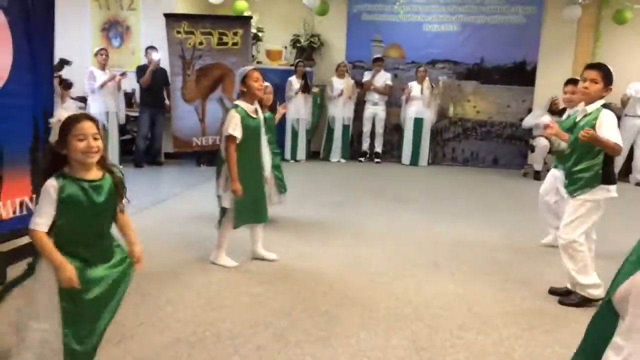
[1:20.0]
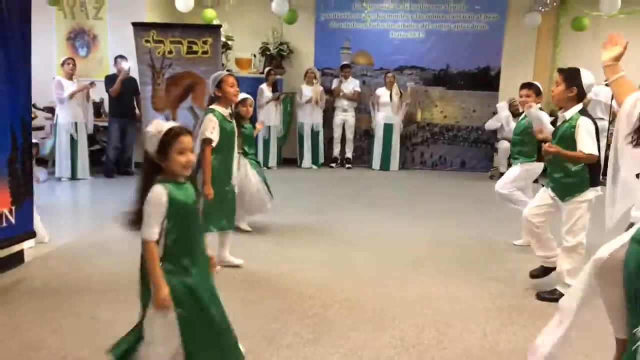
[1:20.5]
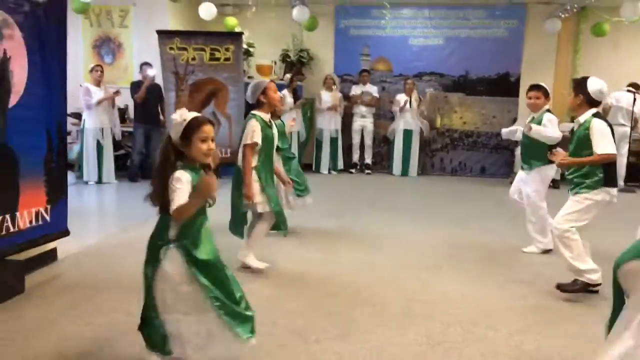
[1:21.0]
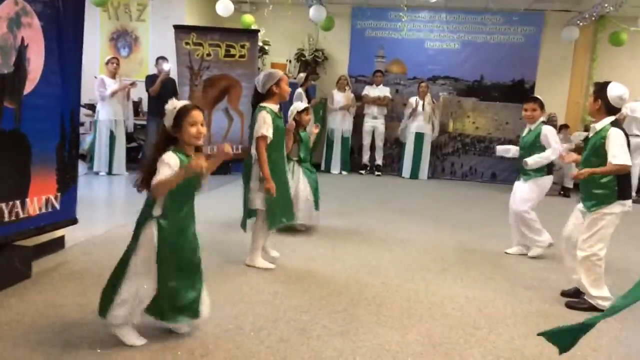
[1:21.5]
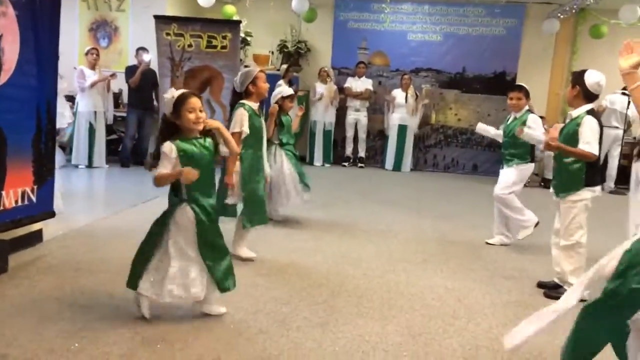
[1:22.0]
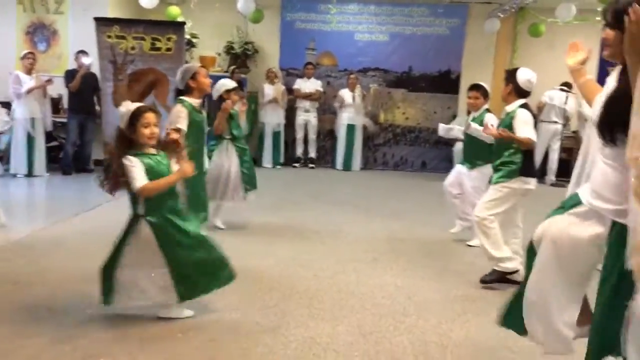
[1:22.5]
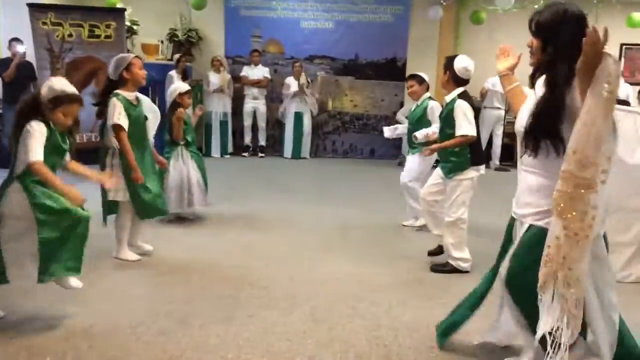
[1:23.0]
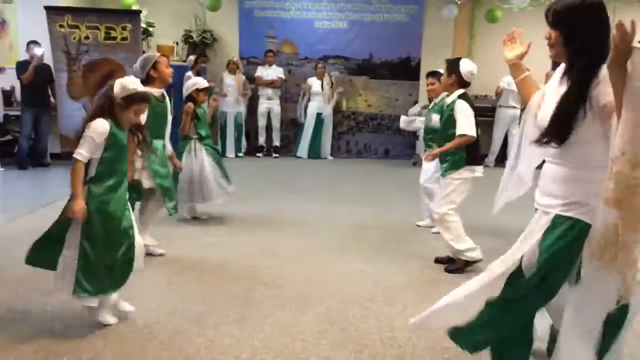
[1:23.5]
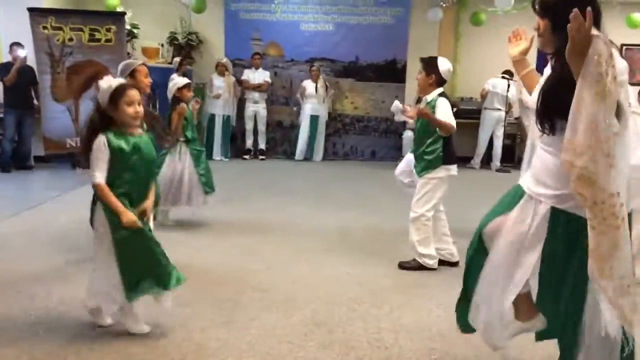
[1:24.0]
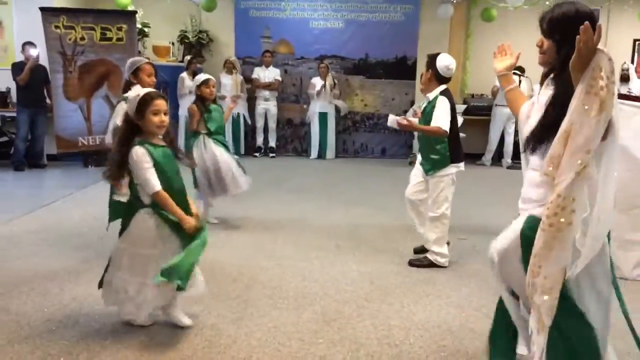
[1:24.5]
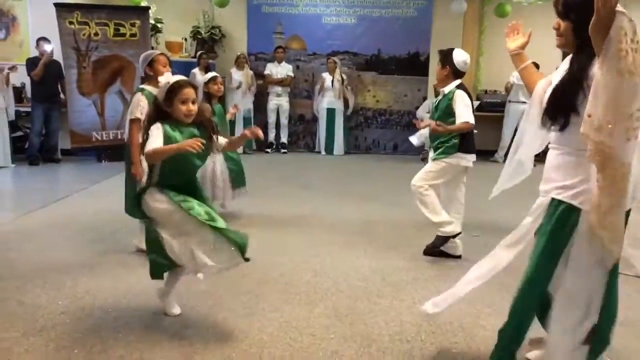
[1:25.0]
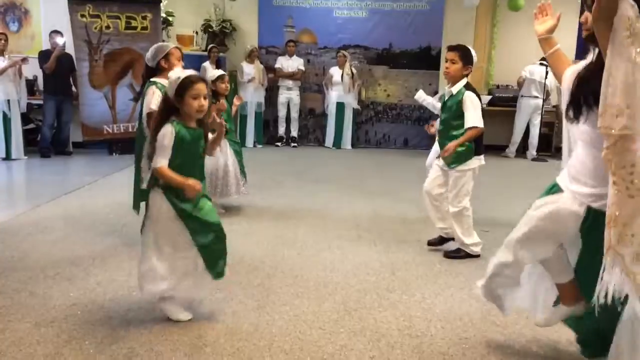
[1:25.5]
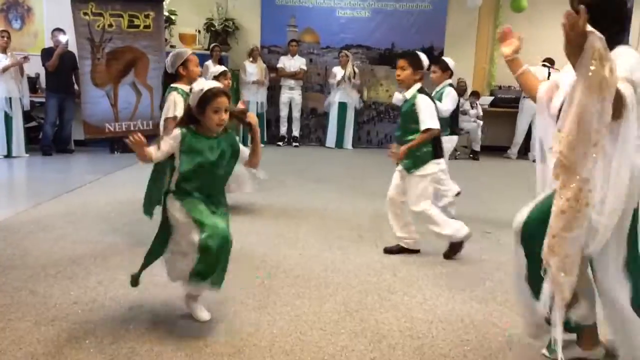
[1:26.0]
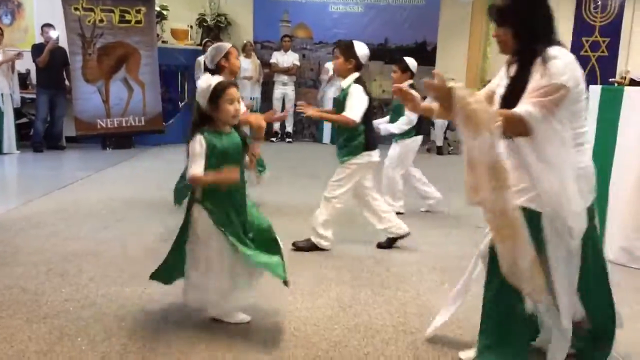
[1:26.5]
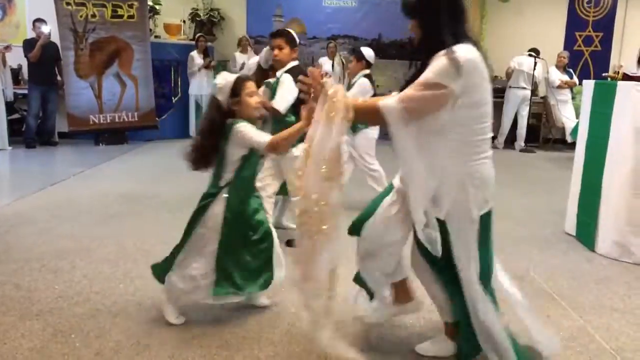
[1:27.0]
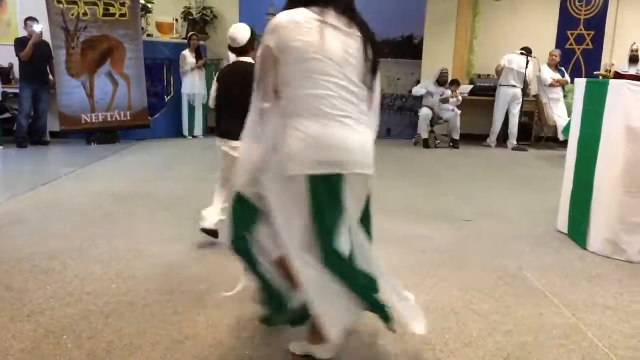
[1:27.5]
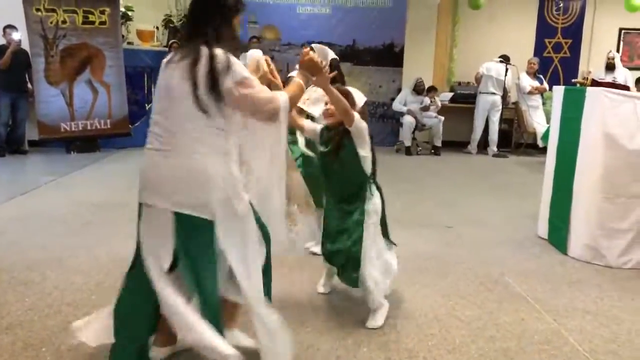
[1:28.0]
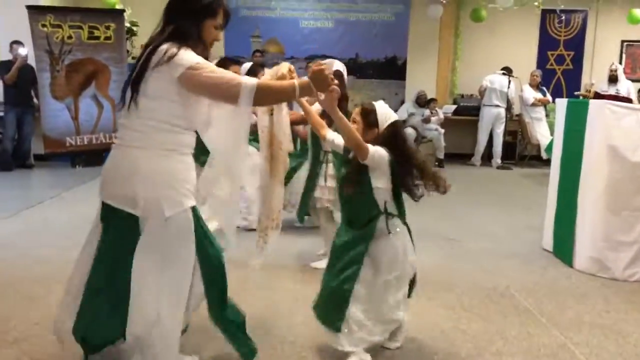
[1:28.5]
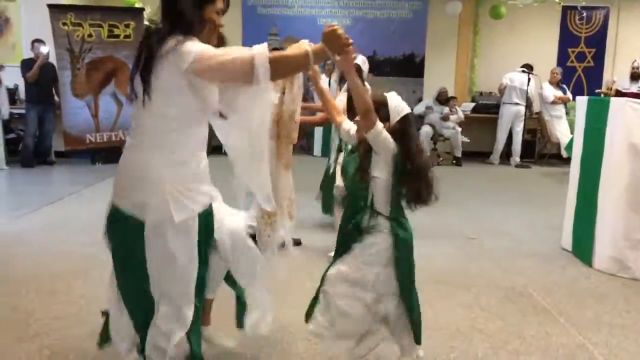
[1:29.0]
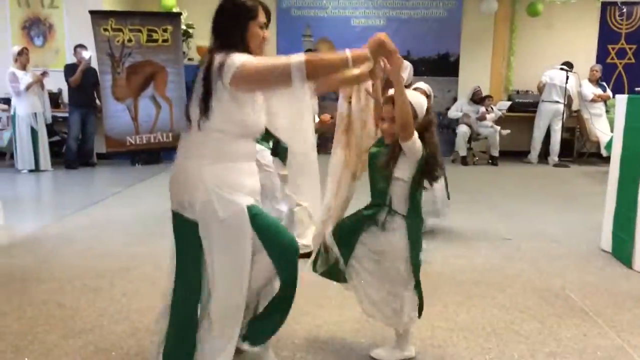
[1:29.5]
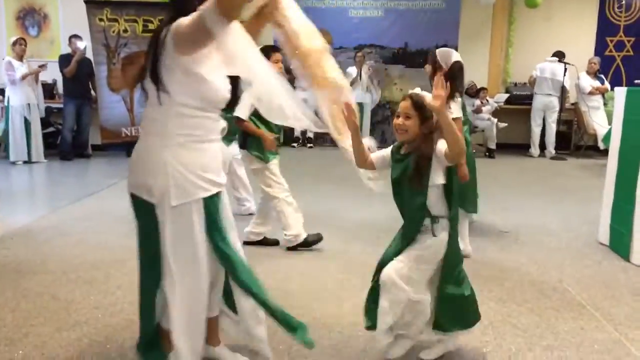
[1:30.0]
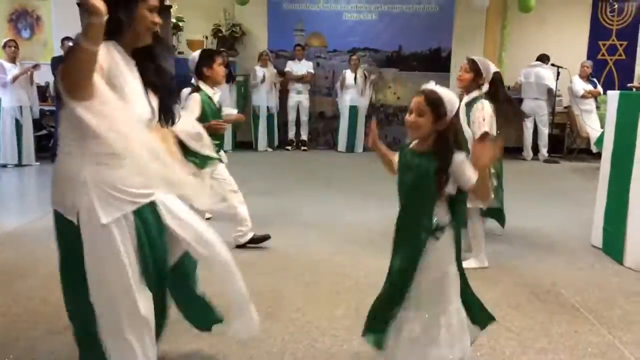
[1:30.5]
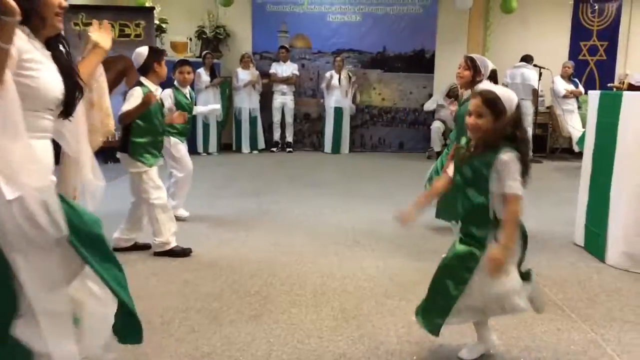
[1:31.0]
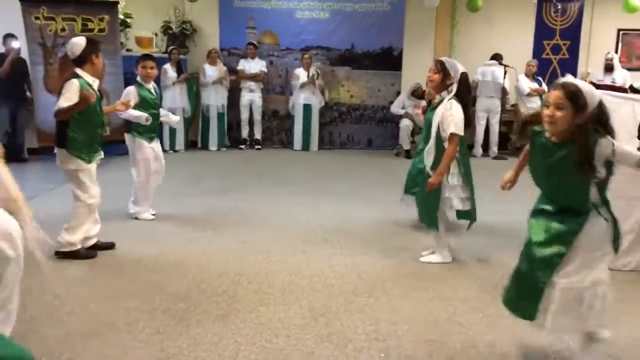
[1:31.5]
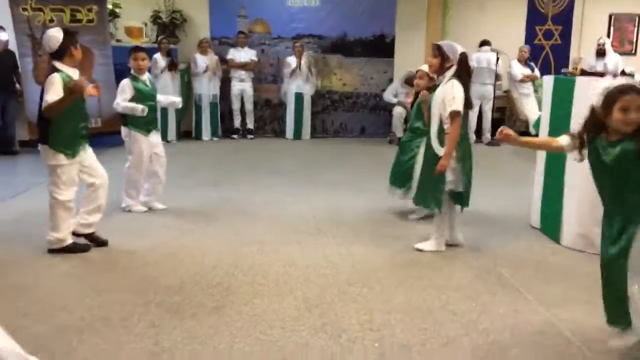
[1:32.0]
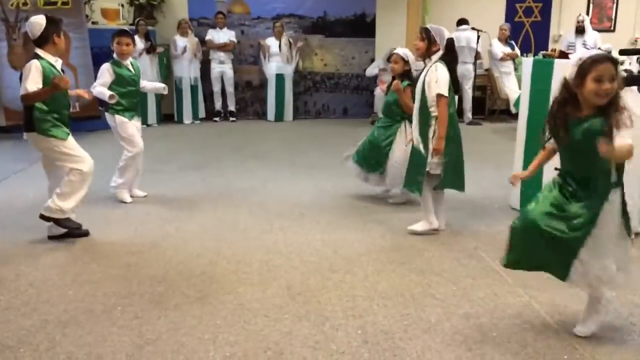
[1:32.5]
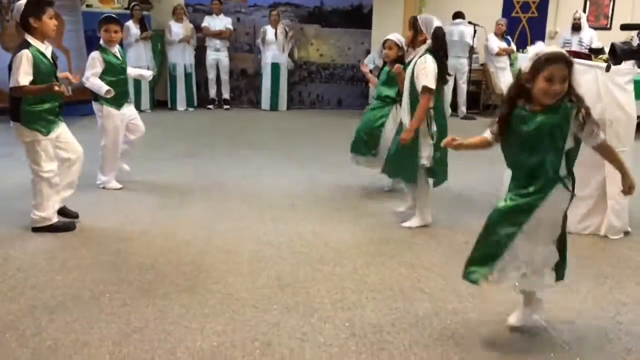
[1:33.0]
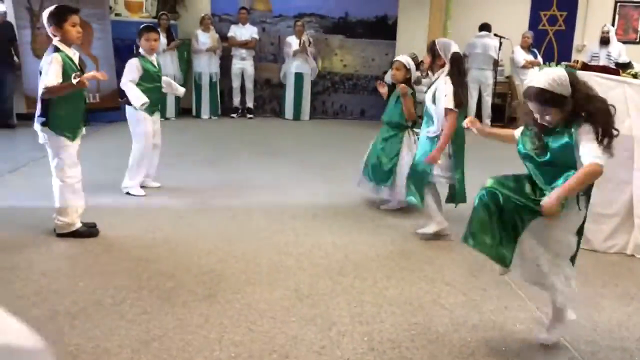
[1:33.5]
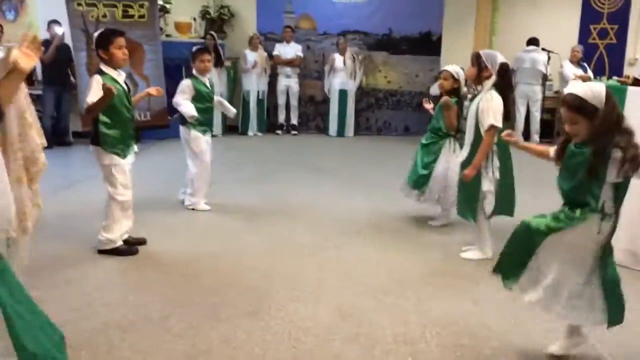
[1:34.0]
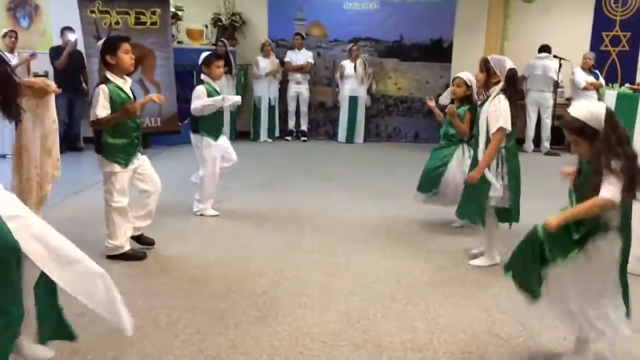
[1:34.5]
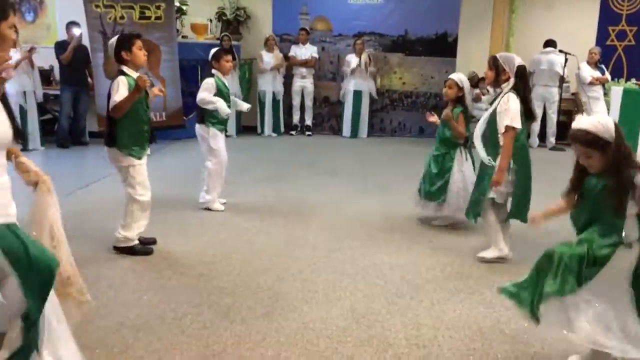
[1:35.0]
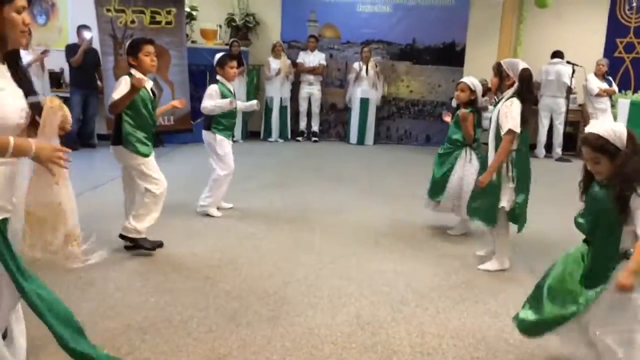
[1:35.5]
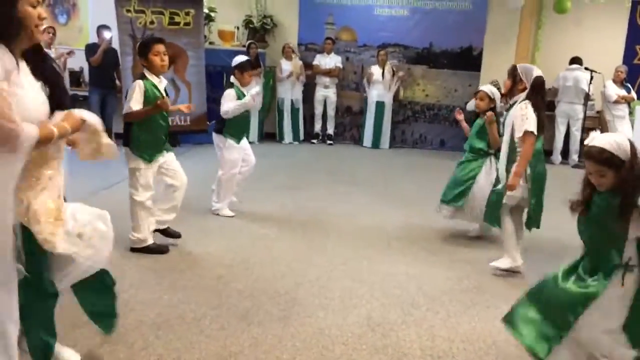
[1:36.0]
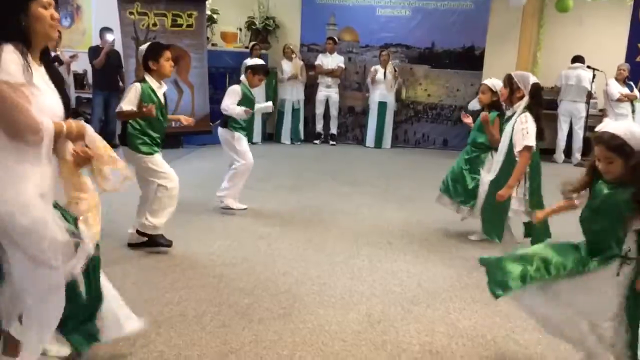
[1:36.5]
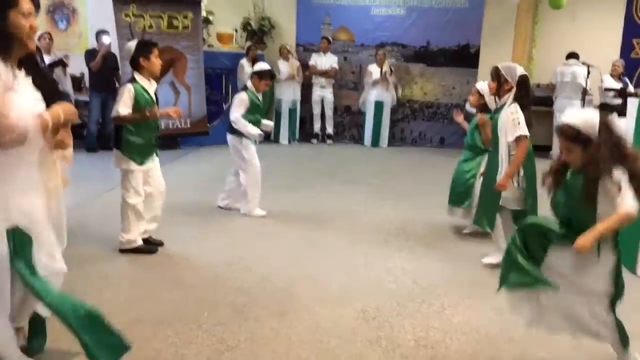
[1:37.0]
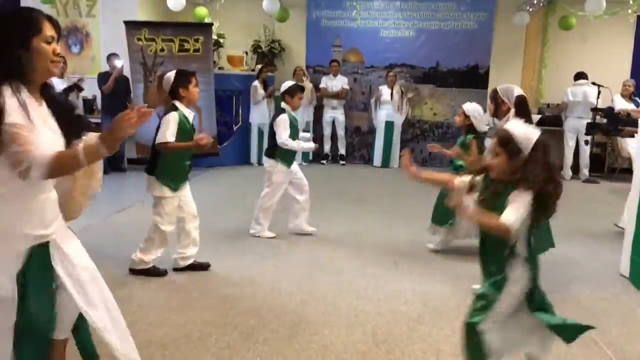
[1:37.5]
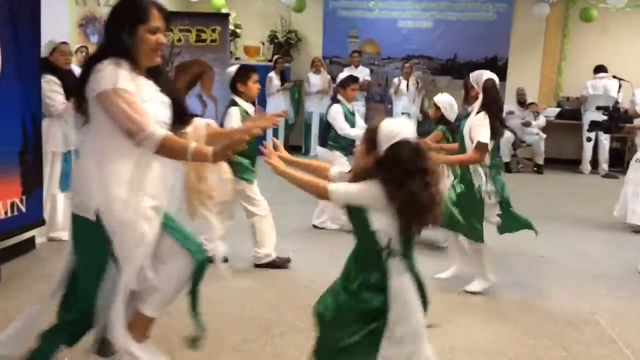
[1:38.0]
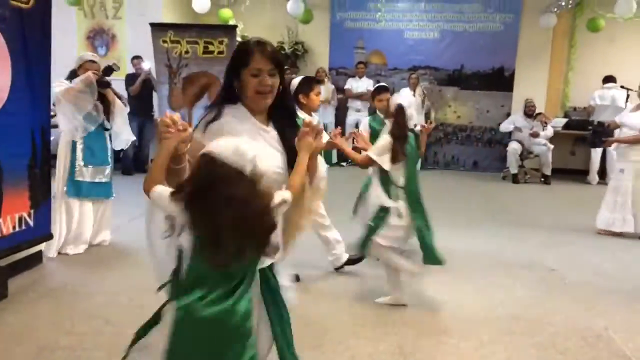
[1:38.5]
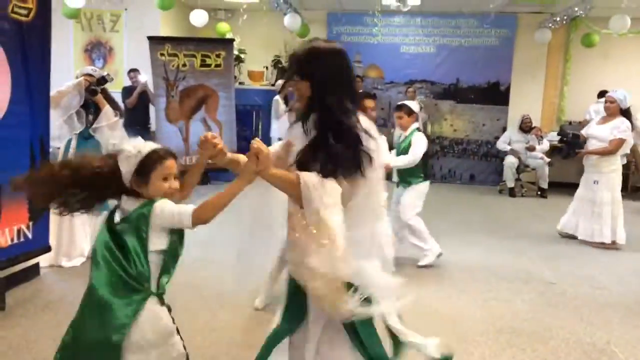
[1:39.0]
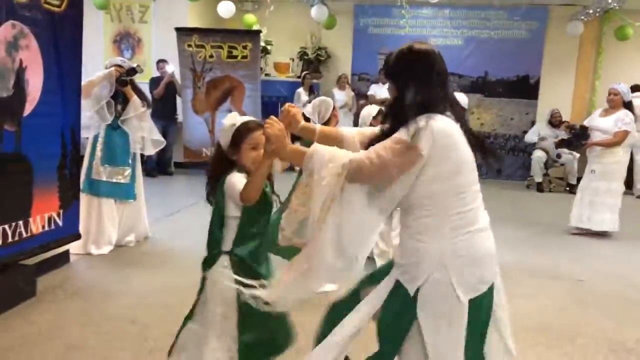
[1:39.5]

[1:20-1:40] The children are enjoying themselves as they spin around, skip toward each other, jump back, put their heads down, spin around in a circle, and hold hands as they dance. They watch an adult as a reference, since they are very young. Something that looks like a Star of David is possibly in the right-hand corner, while the words on the door appear to be Hindi. The children seem to keep skipping in place, then hold hands, turn around, and skip back in place. The little girls wear white shoes; one boy has black shoes on while the other's are white.